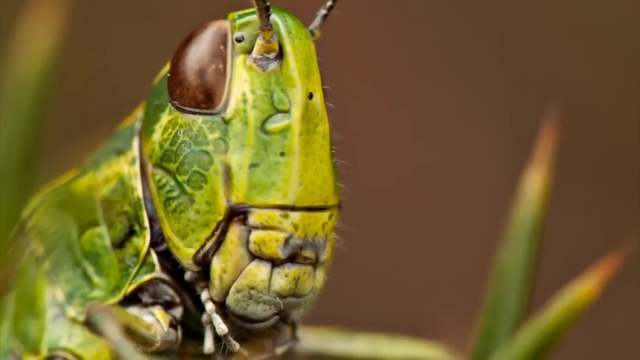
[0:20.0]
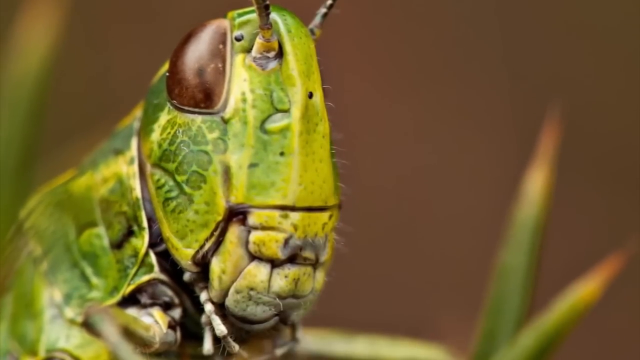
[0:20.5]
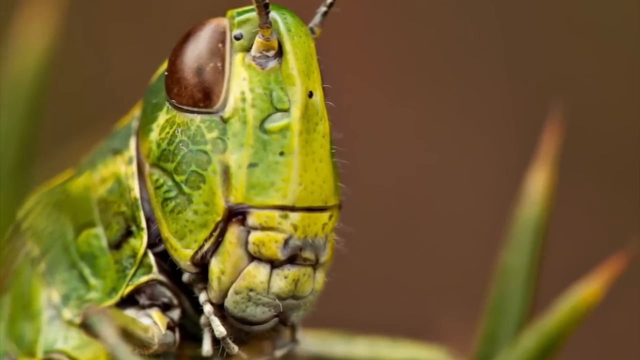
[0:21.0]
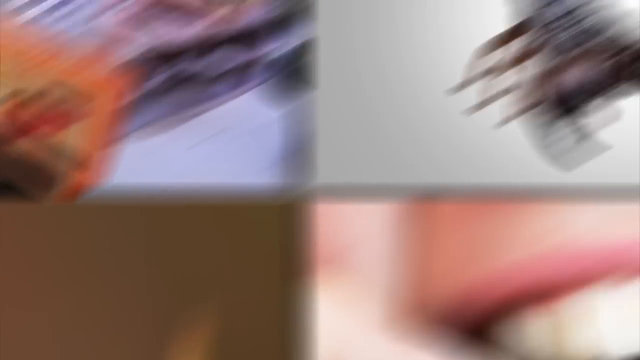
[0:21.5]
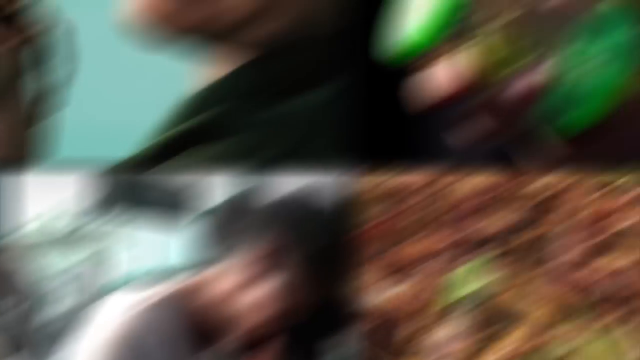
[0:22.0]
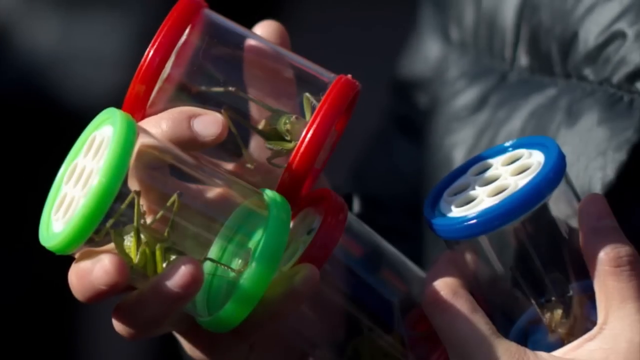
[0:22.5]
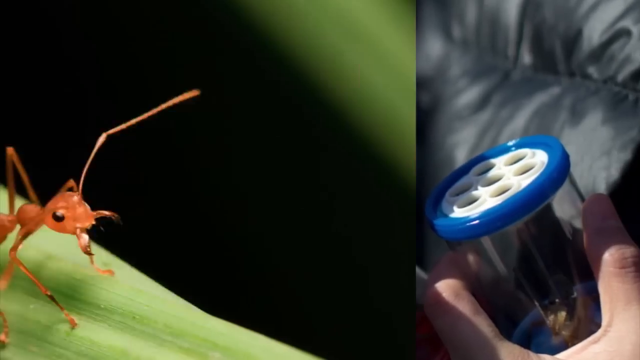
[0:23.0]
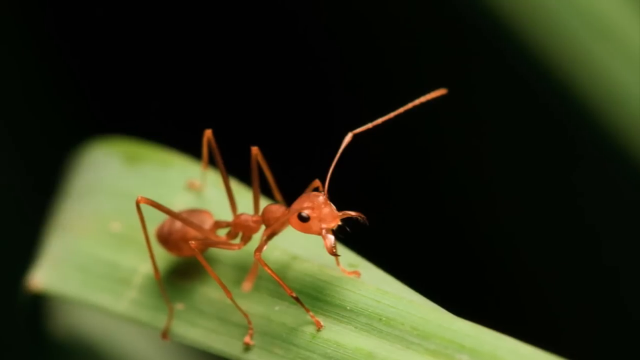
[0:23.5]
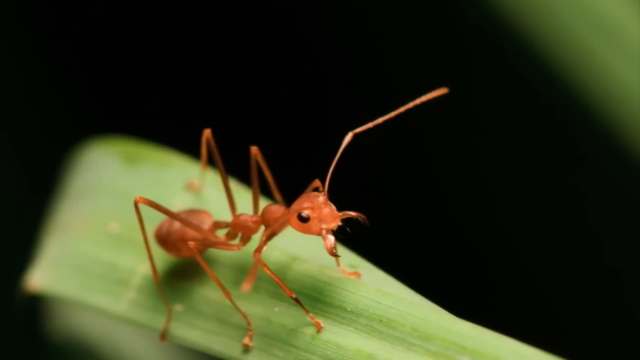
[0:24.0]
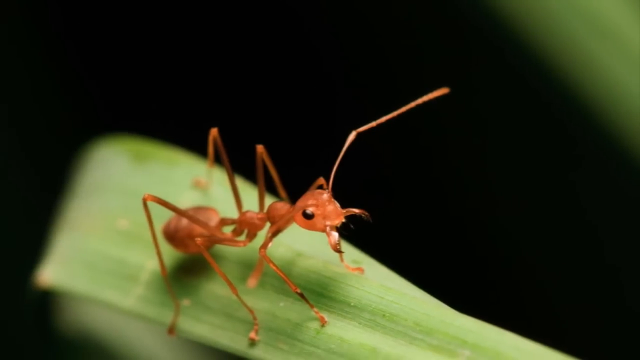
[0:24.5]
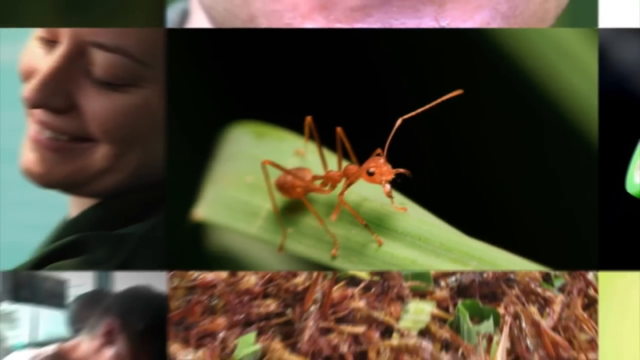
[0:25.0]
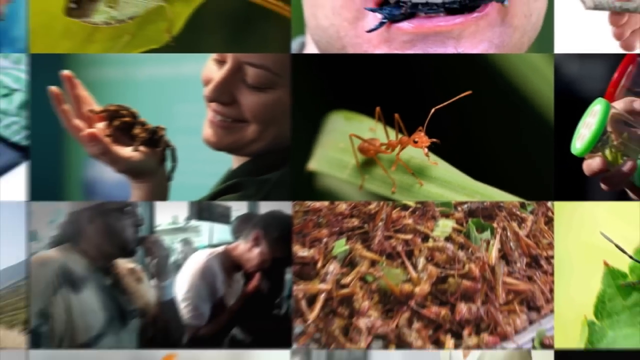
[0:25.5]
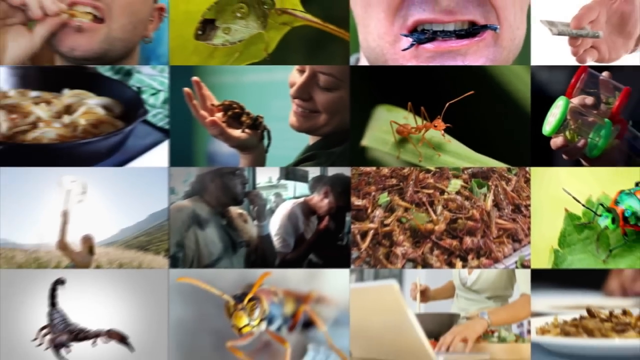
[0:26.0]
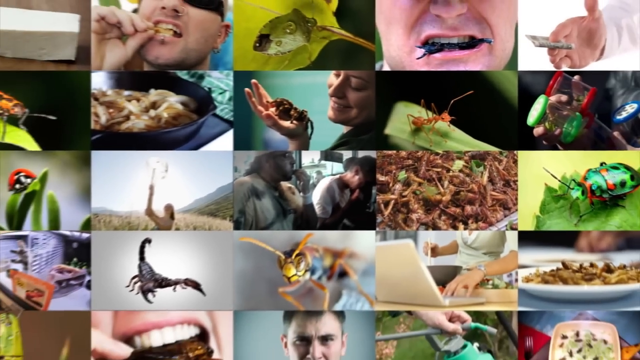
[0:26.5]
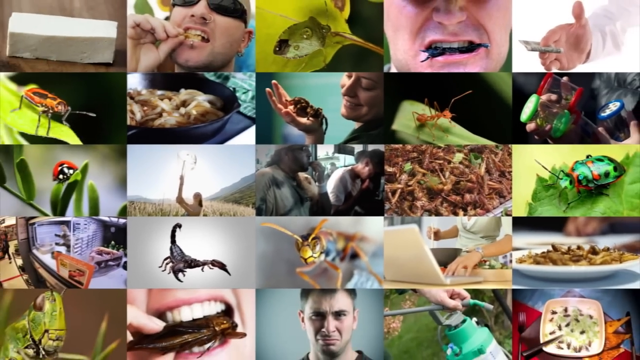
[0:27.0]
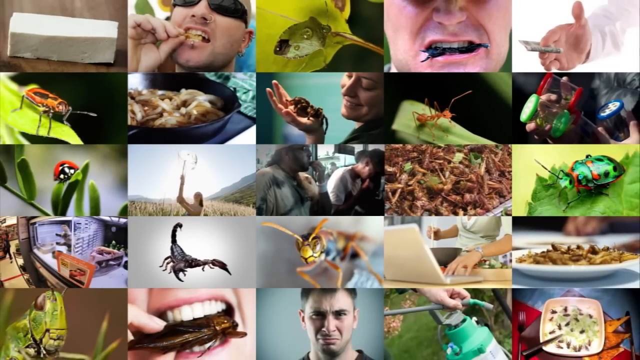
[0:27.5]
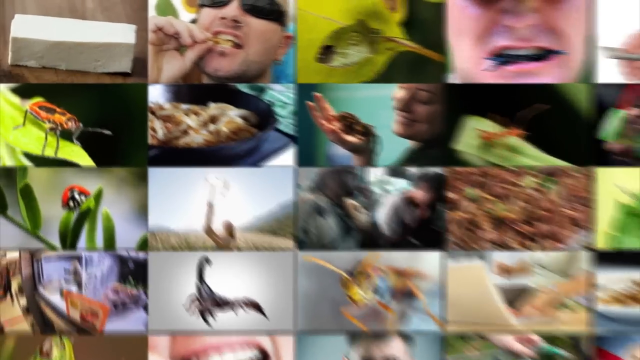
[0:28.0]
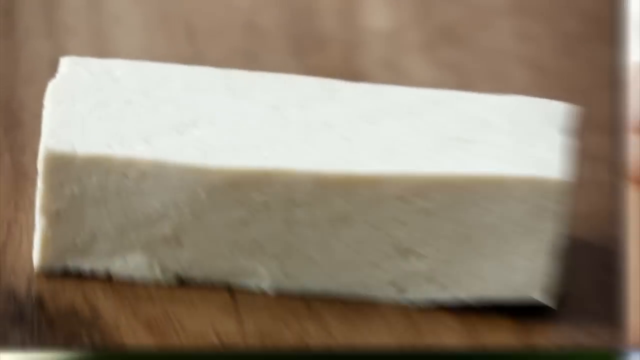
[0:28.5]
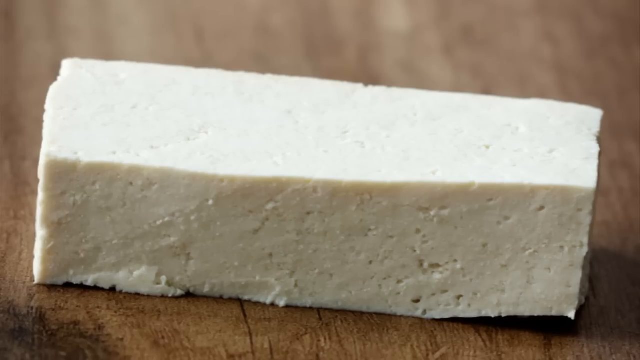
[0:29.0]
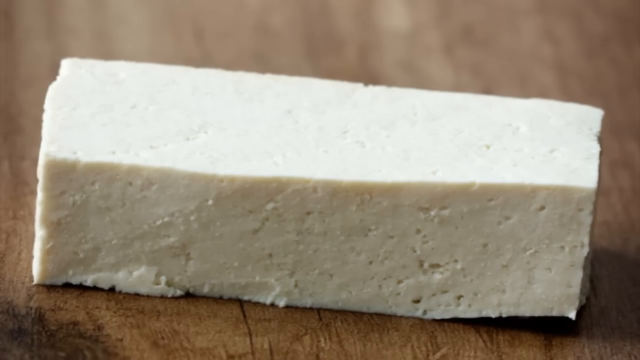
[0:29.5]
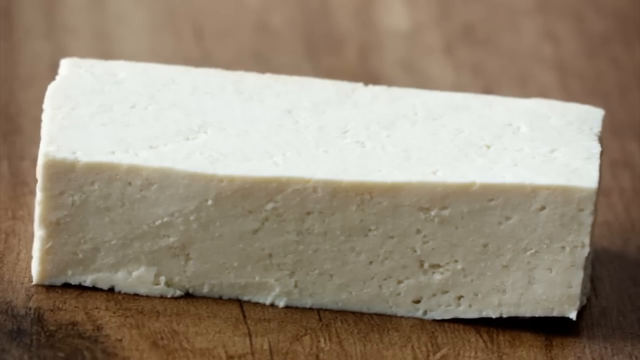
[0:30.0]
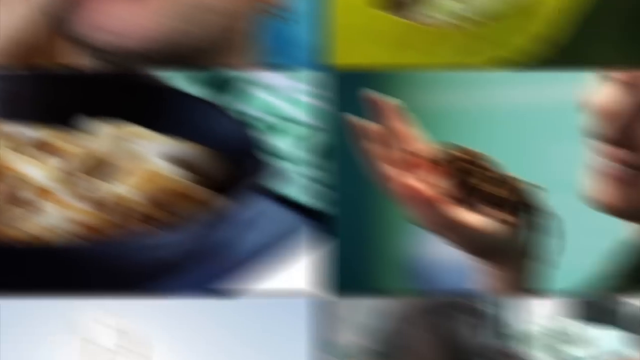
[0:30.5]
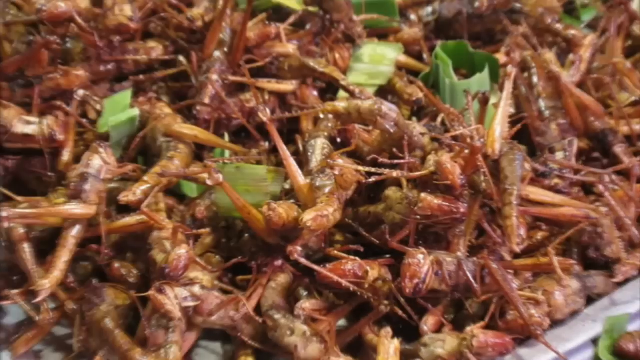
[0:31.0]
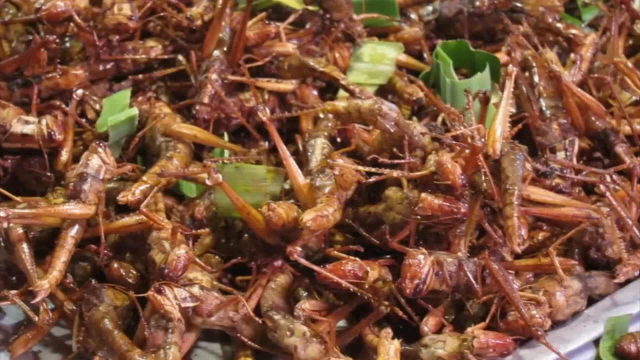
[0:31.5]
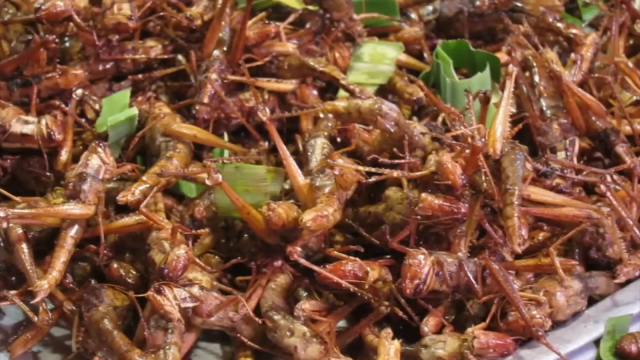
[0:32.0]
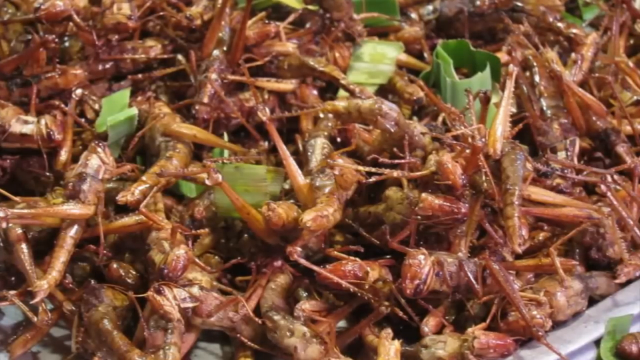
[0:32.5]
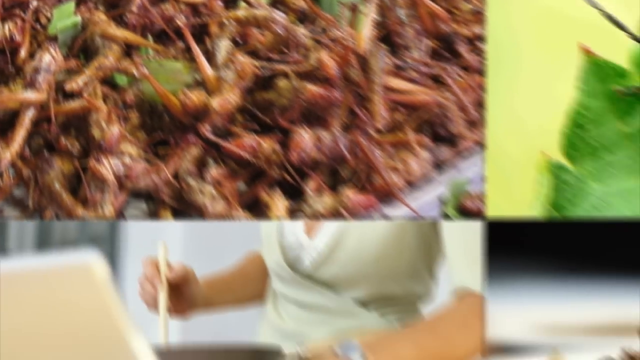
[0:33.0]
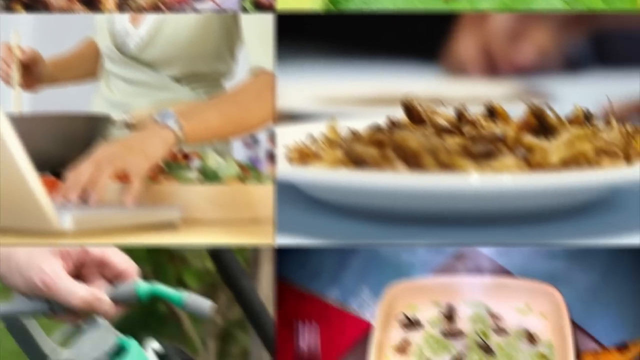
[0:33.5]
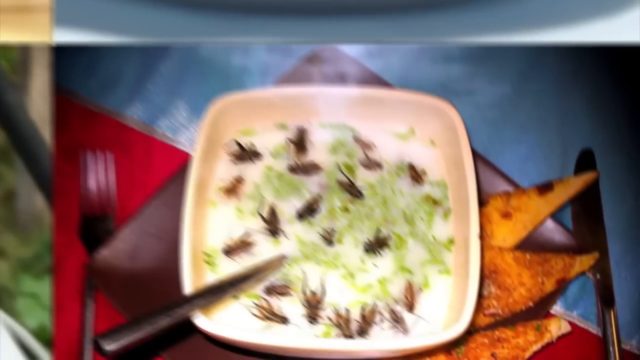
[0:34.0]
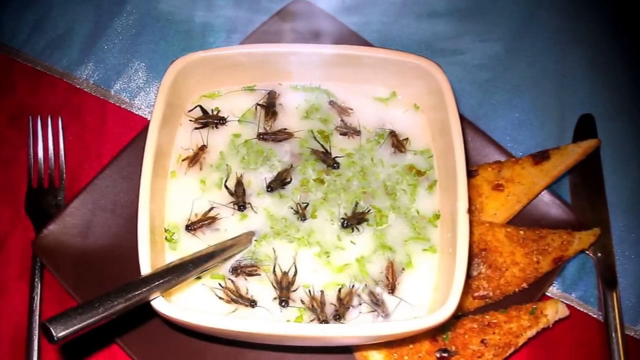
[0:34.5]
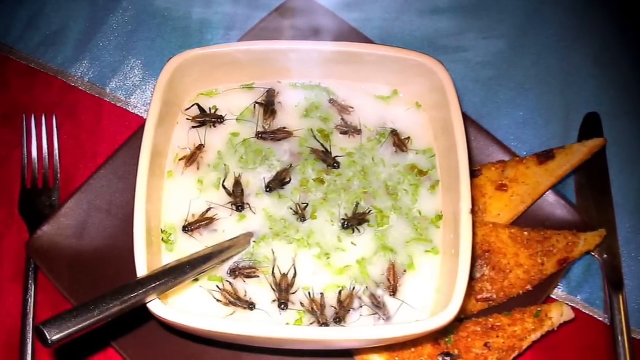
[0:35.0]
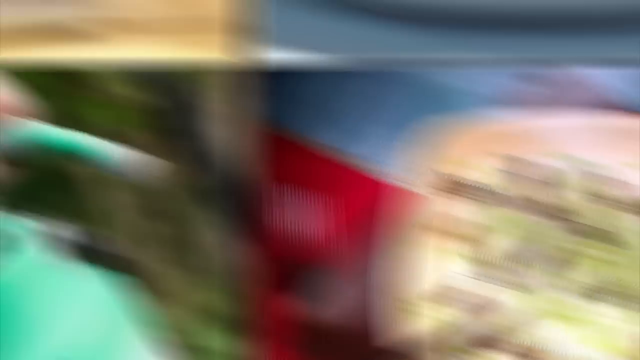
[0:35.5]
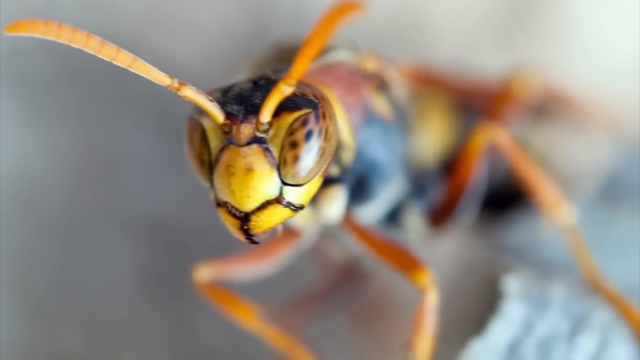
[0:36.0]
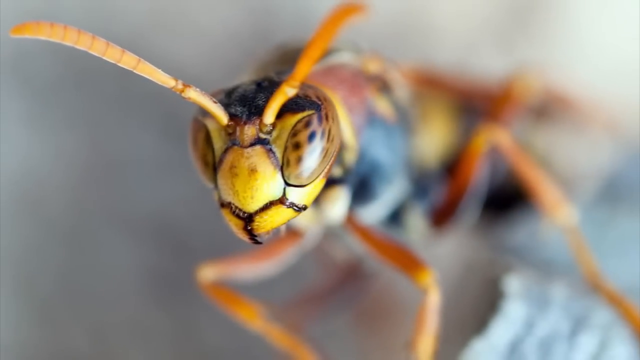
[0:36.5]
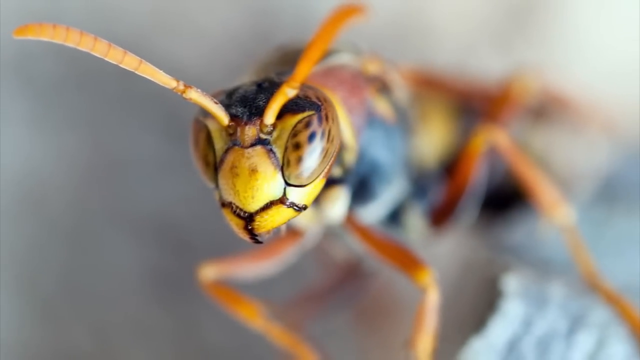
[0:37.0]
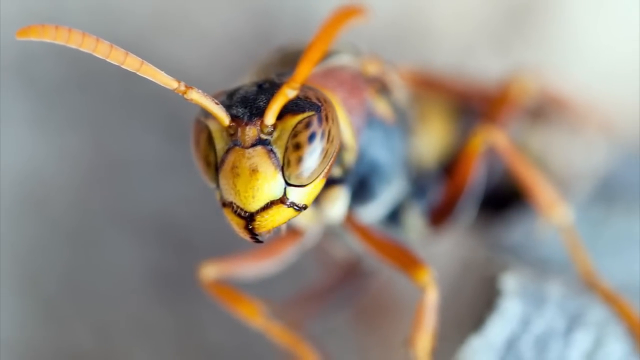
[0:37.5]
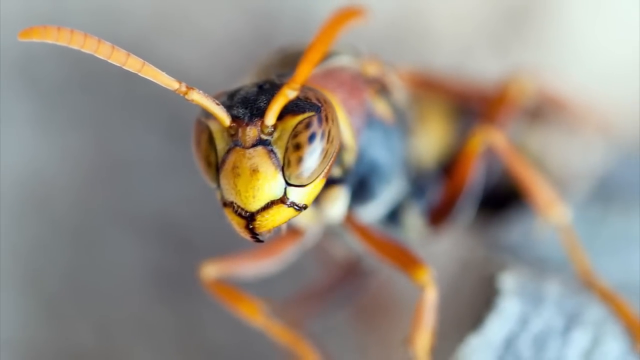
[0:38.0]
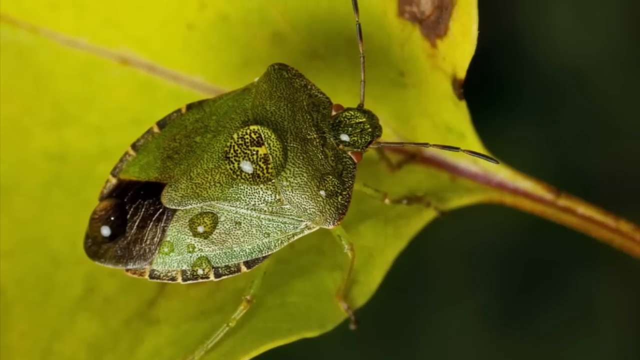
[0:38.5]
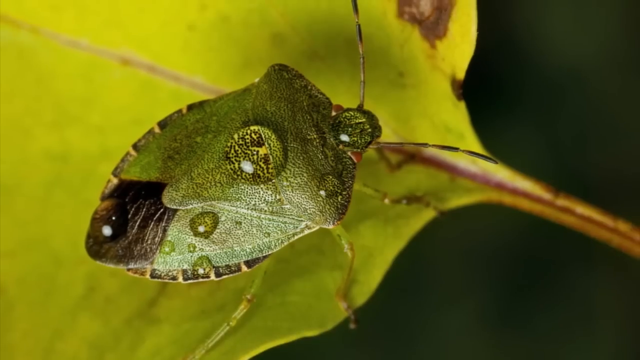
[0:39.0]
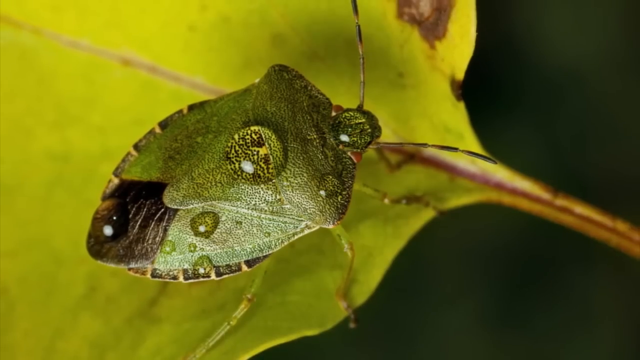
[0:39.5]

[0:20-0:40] The picture of the green grasshopper continues, then another picture shows very big green grasshoppers kept in little plastic containers; one is green, red and blue, and another is red. A zoomed-in picture shows what appear to be pinching ants, red ants. Next comes a picture of a brick of tofu, then the fried grasshoppers again, this time with some garnish. A bowl of cricket soup follows, in what looks like a restaurant. A yellow wasp or hornet is shown in a zoomed-in picture, followed by a picture of what appears to be a stink bug.